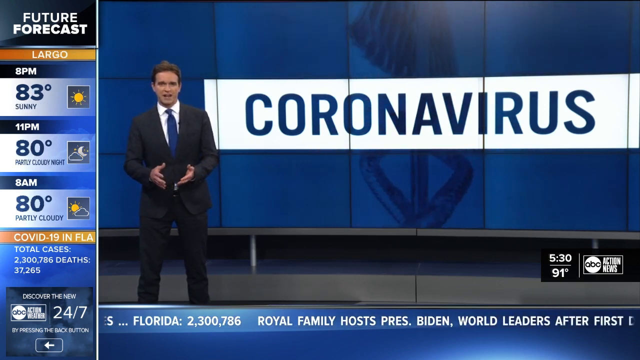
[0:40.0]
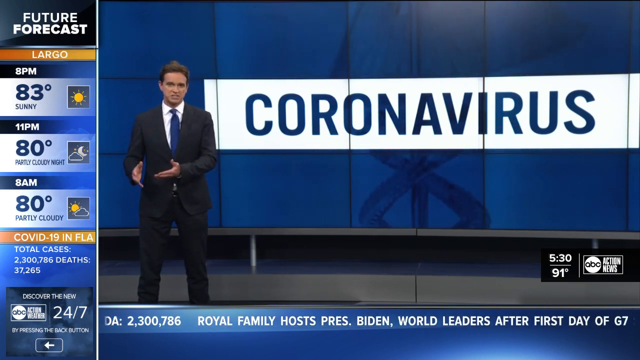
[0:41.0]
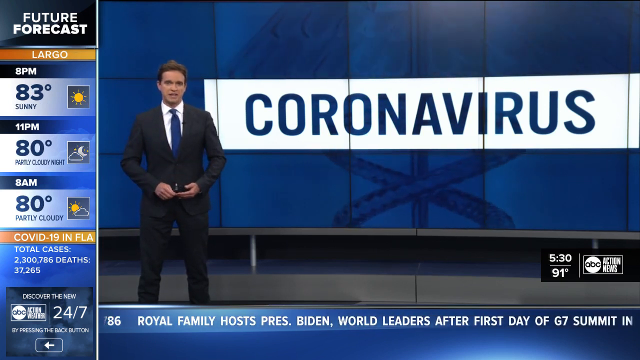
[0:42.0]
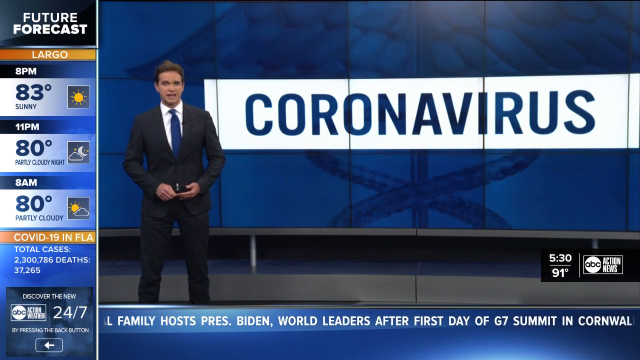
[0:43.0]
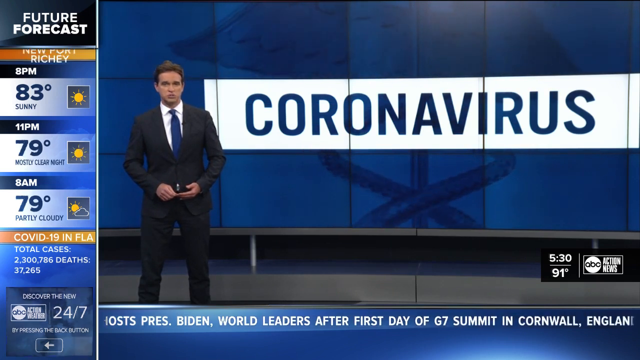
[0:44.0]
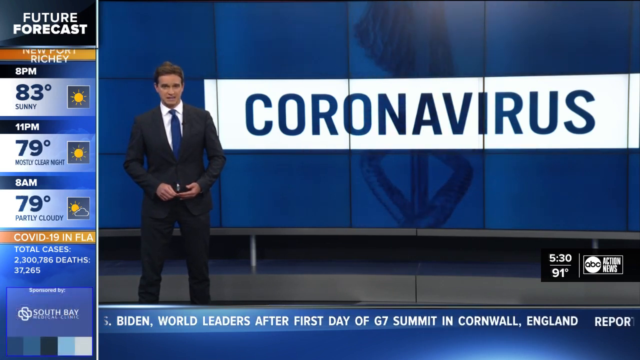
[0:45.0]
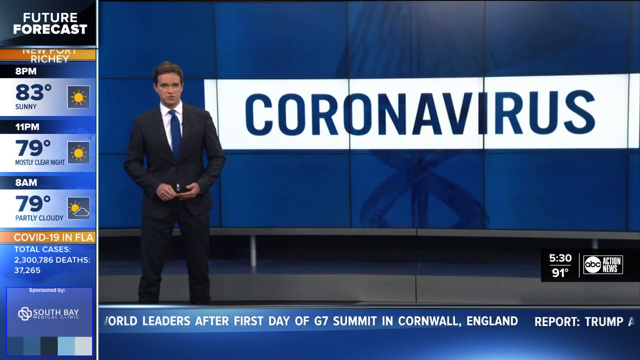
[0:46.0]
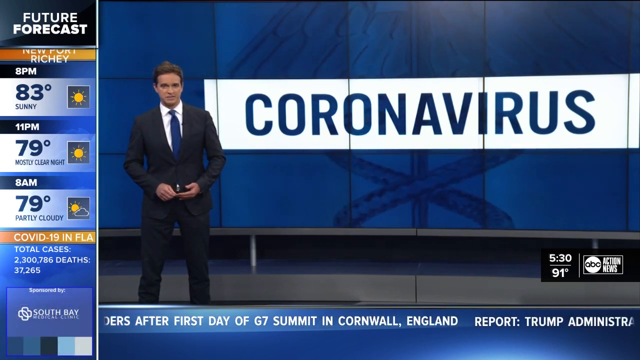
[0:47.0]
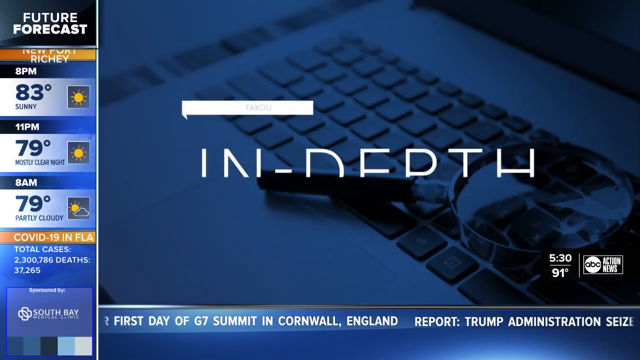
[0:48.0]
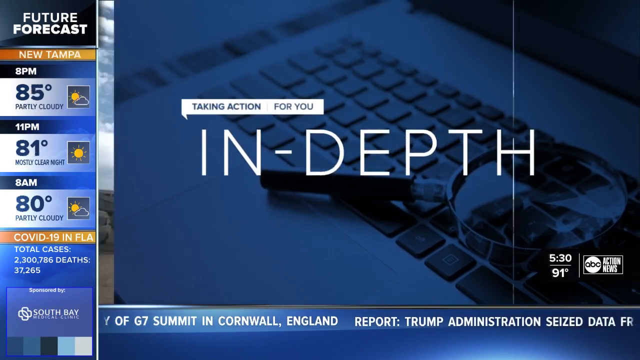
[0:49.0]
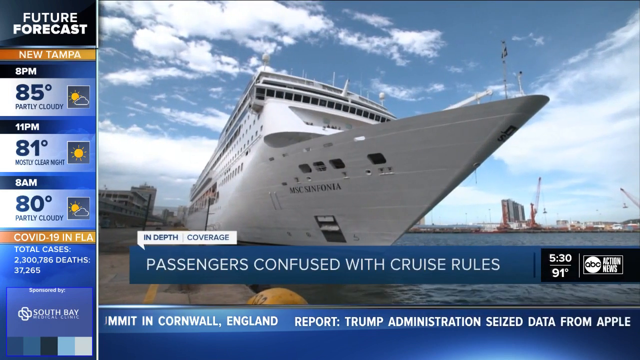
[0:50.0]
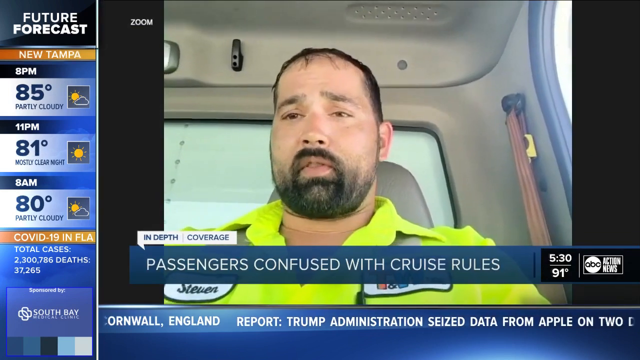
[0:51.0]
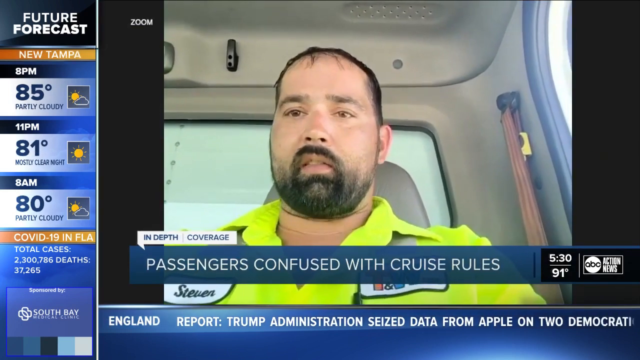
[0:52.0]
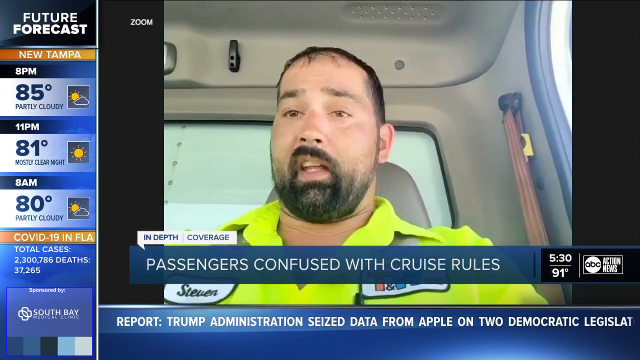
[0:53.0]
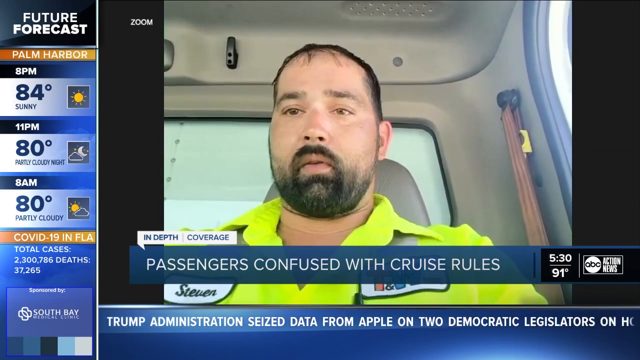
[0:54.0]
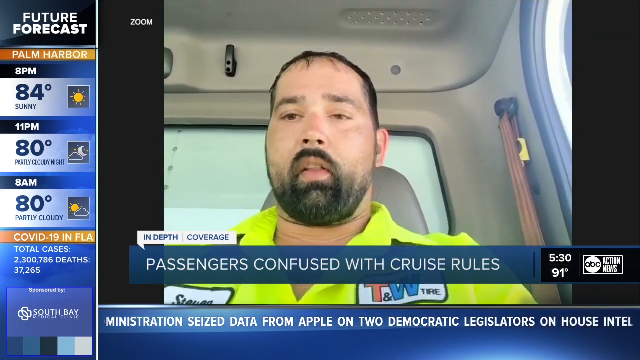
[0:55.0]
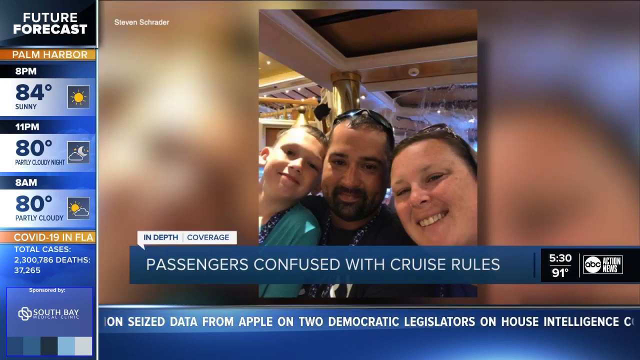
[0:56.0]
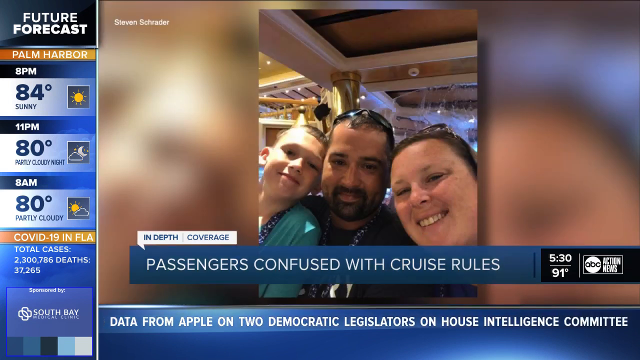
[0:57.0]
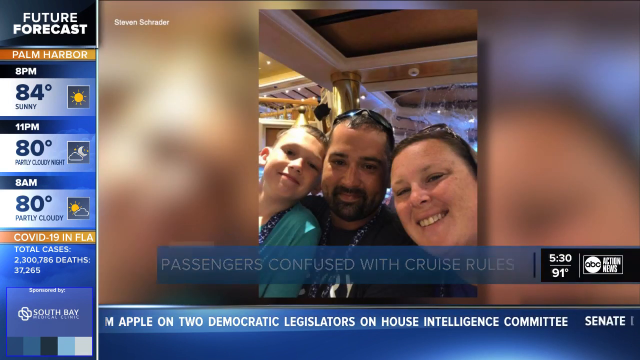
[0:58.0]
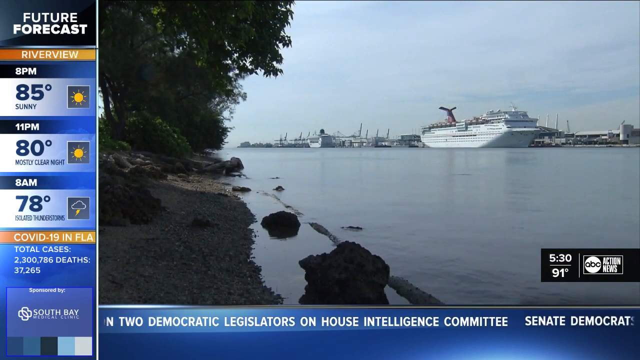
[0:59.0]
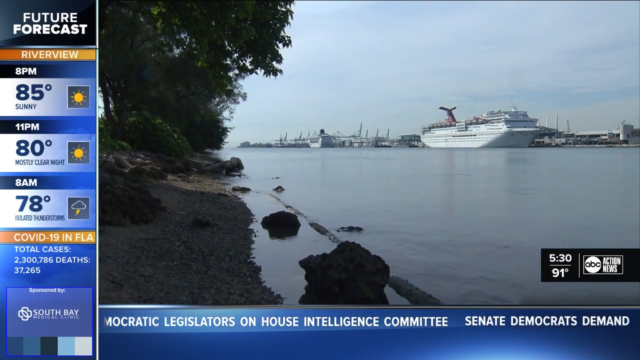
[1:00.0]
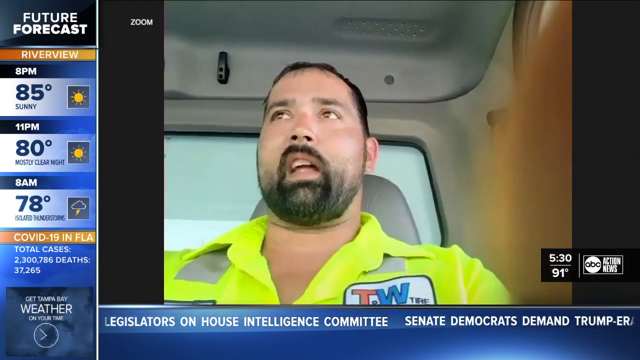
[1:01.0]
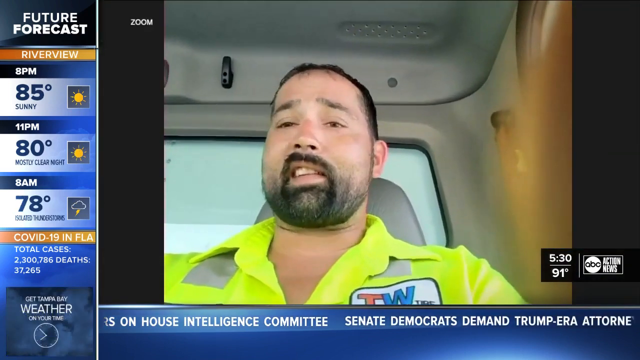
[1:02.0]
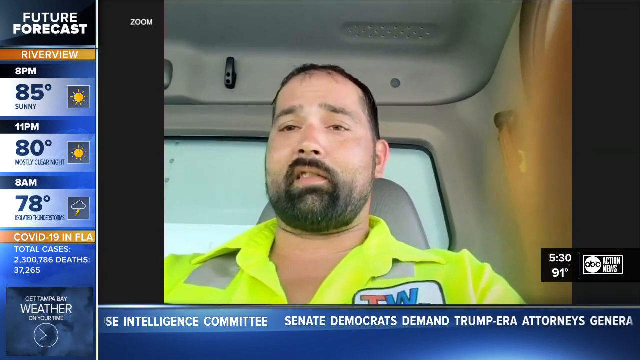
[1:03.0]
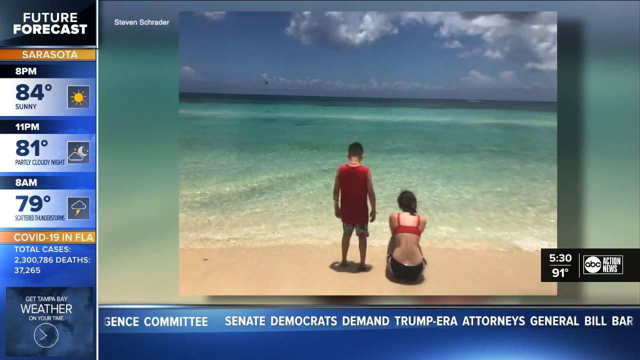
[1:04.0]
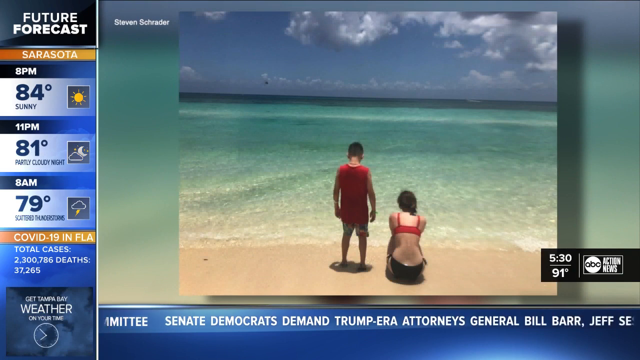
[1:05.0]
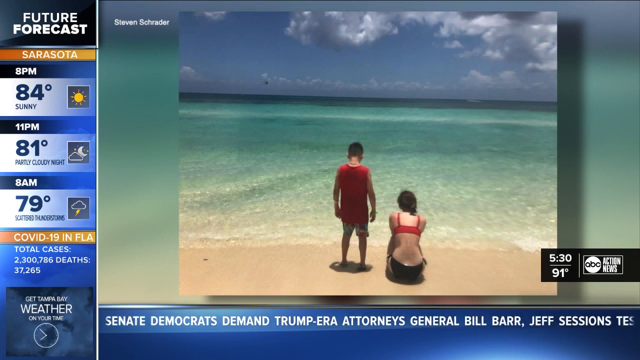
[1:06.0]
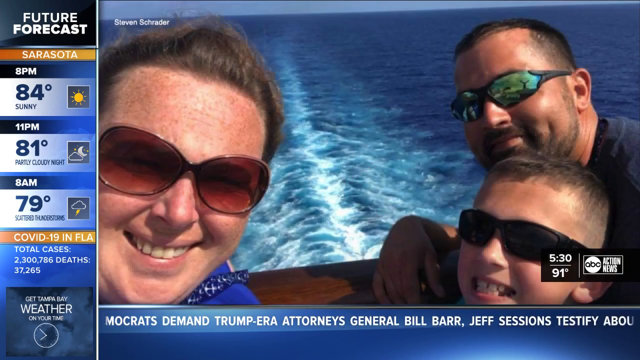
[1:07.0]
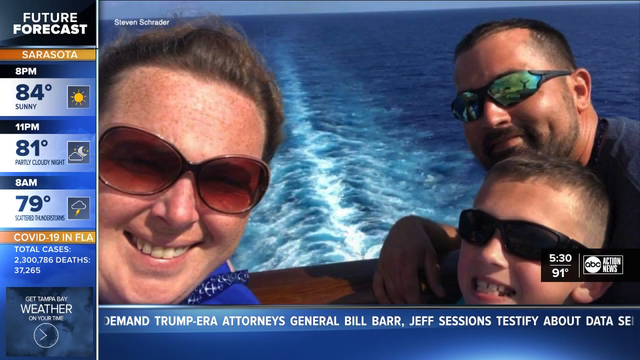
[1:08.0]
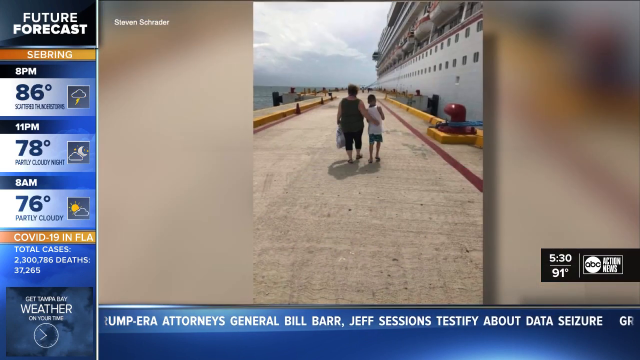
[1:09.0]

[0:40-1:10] The news anchor stands, talking to the audience, with a "South Bay" icon in the bottom left. The video quickly cuts to a computer and a keyboard with the words "in depth". It then moves to a ship and passengers confused with cruise rules. A group photo follows, then a ship at sea, and a person in a reflective jacket speaking. Next comes a beach with two people on the shore, followed by more tourist-type pictures. The photos follow one another at a steady, quick pace: the person is interviewed, then shown with their family, then the ship appears and a person is speaking again, followed by more holiday pictures.